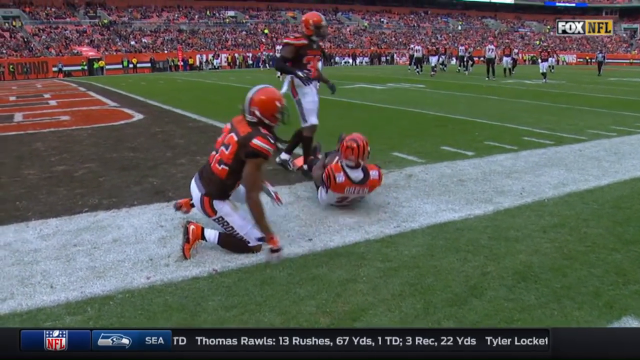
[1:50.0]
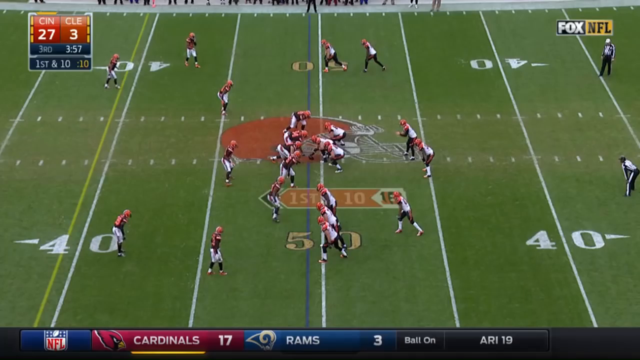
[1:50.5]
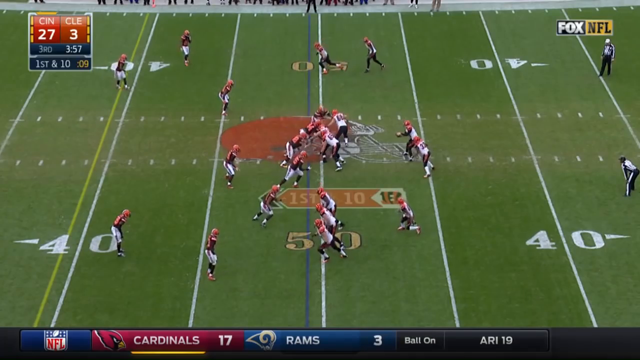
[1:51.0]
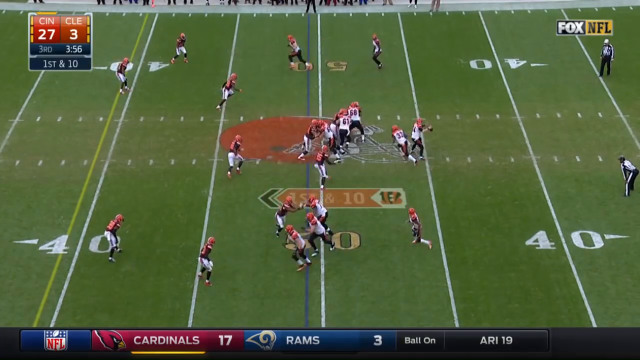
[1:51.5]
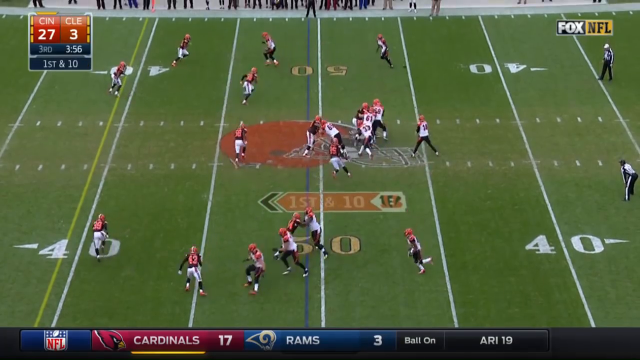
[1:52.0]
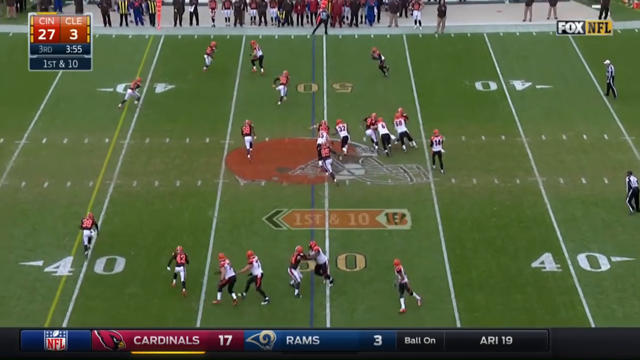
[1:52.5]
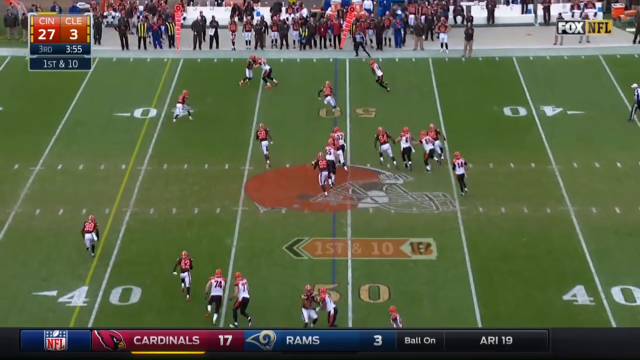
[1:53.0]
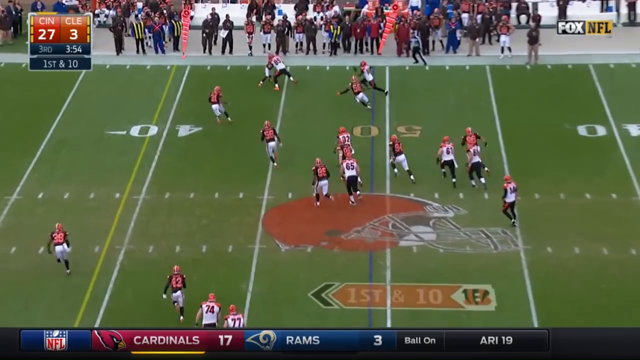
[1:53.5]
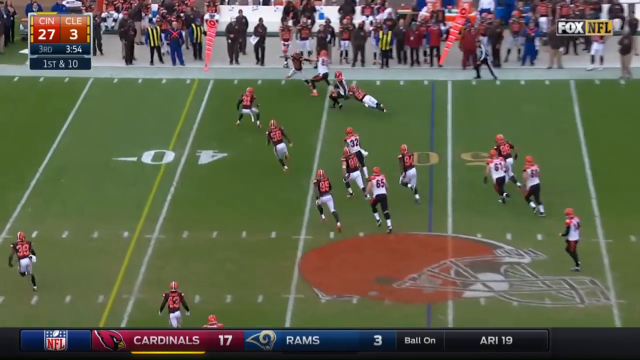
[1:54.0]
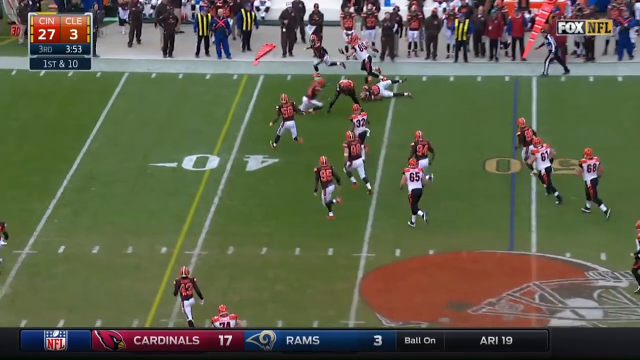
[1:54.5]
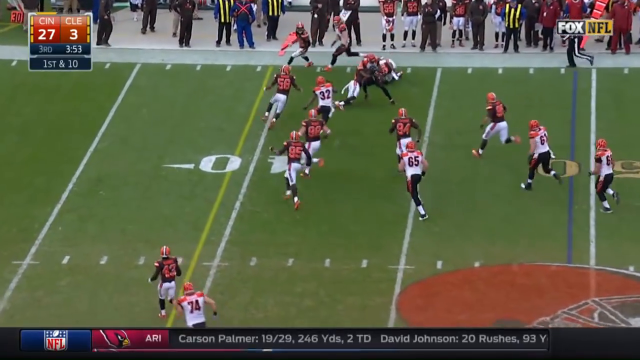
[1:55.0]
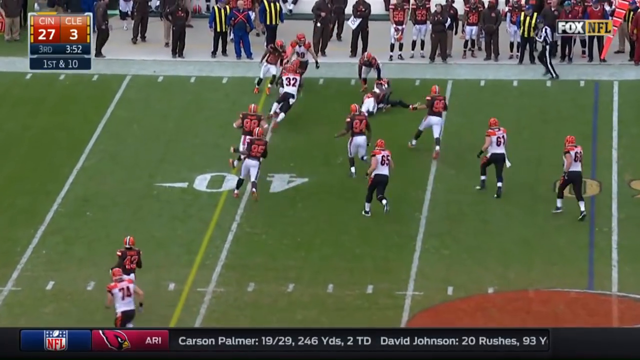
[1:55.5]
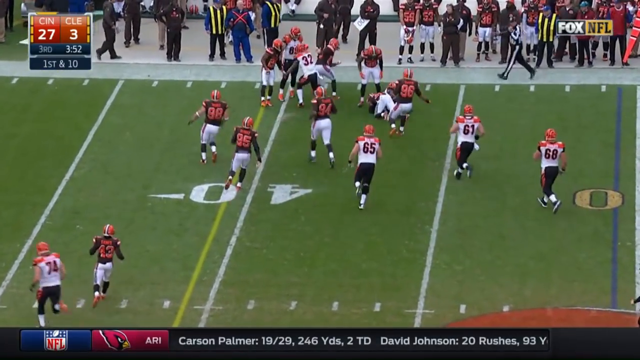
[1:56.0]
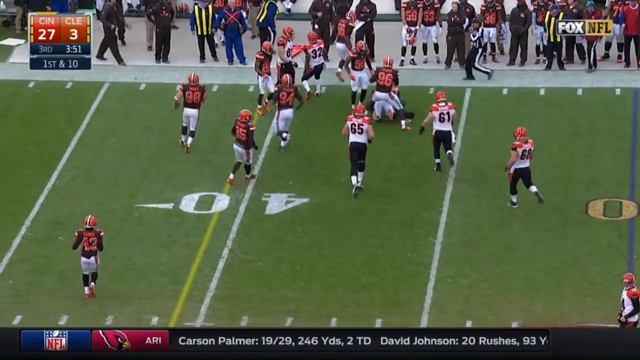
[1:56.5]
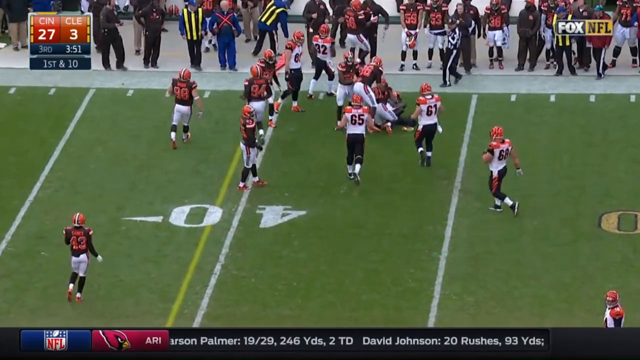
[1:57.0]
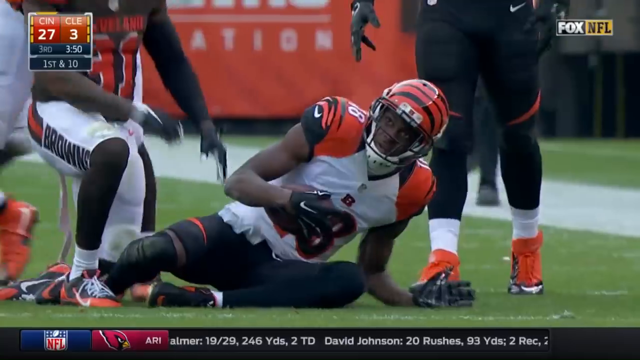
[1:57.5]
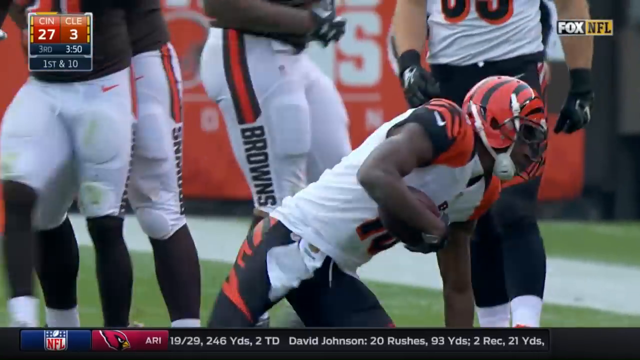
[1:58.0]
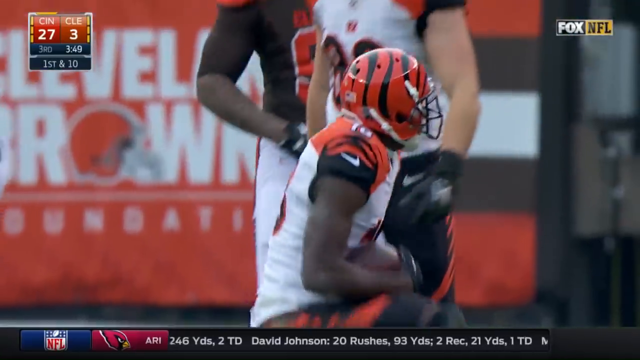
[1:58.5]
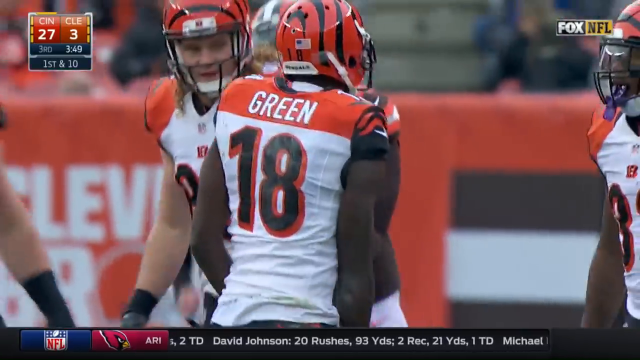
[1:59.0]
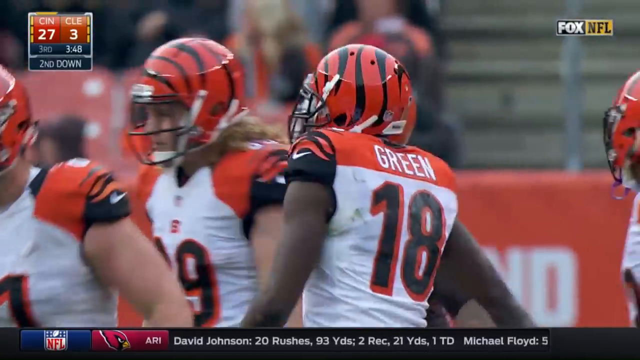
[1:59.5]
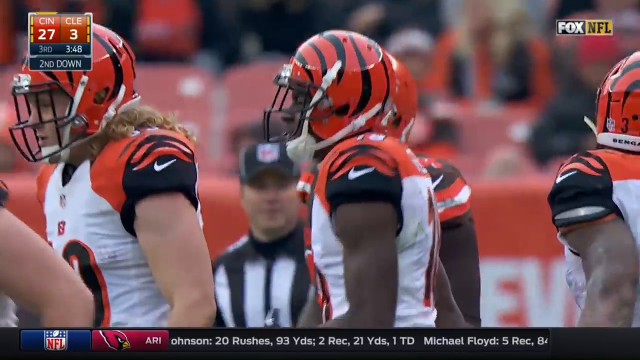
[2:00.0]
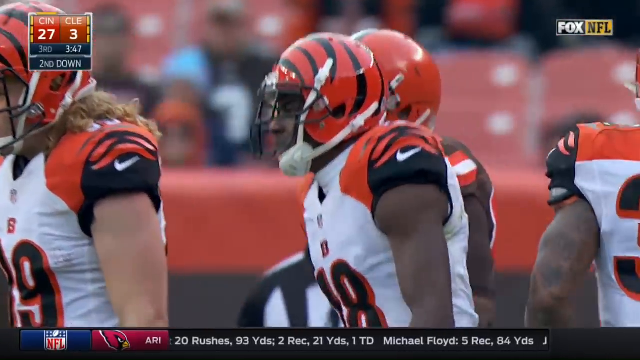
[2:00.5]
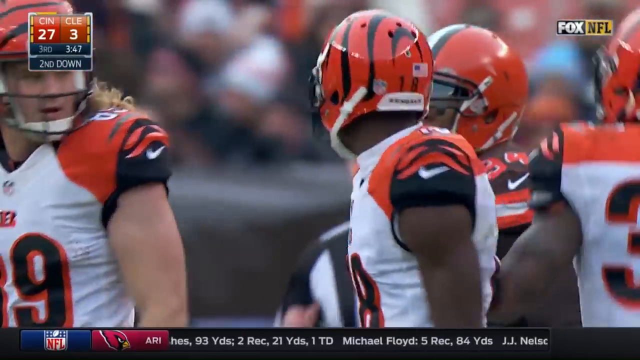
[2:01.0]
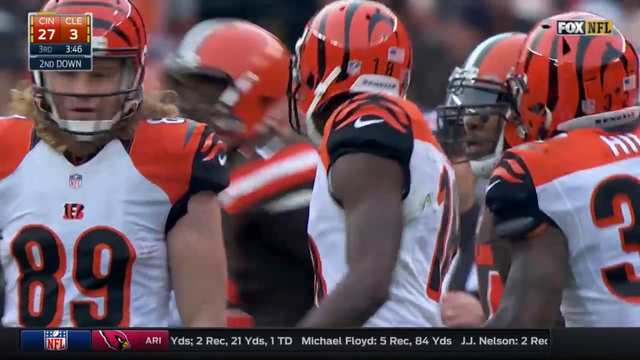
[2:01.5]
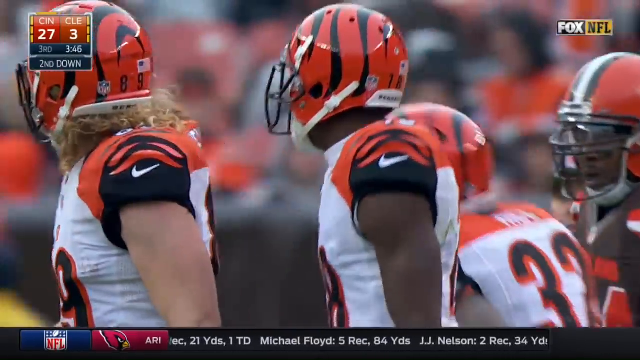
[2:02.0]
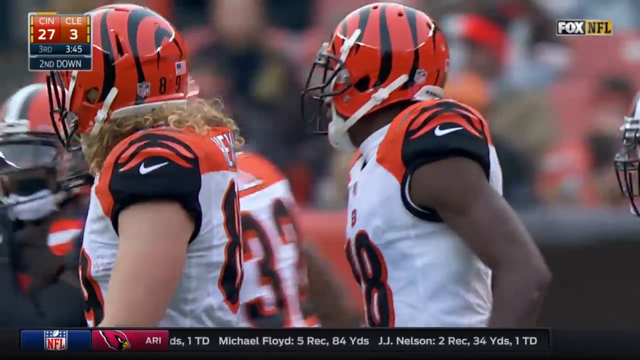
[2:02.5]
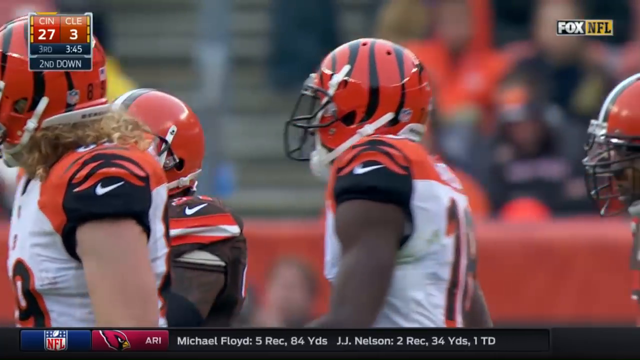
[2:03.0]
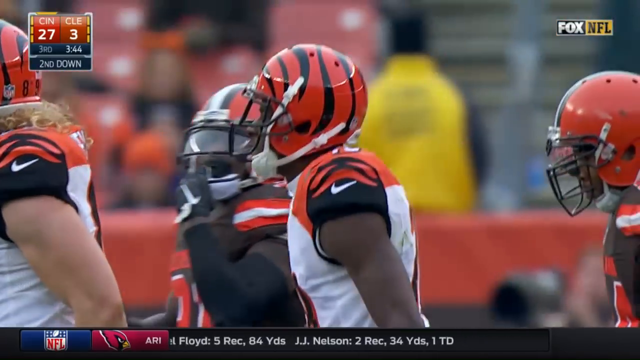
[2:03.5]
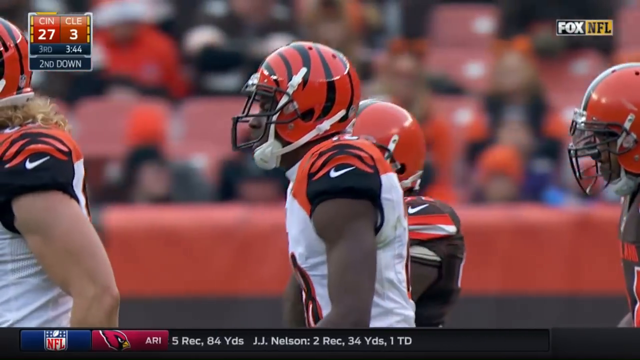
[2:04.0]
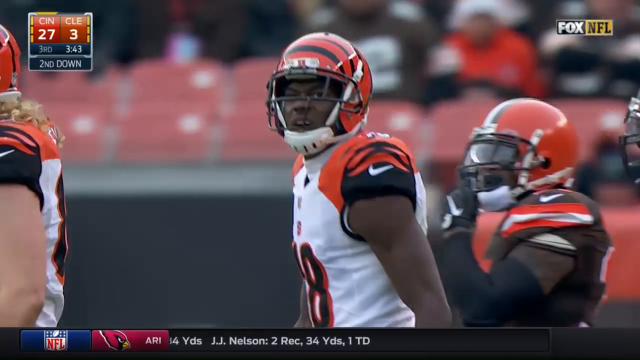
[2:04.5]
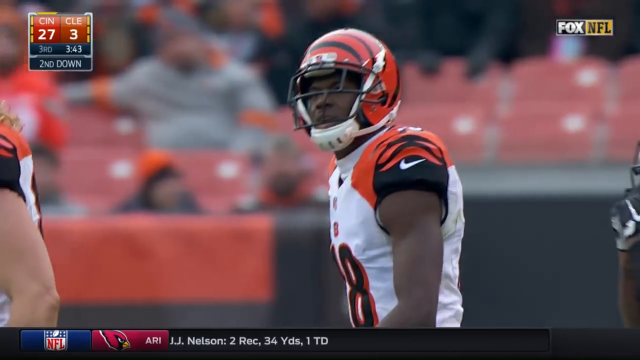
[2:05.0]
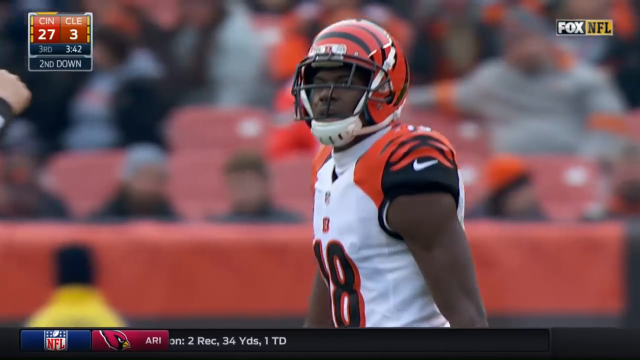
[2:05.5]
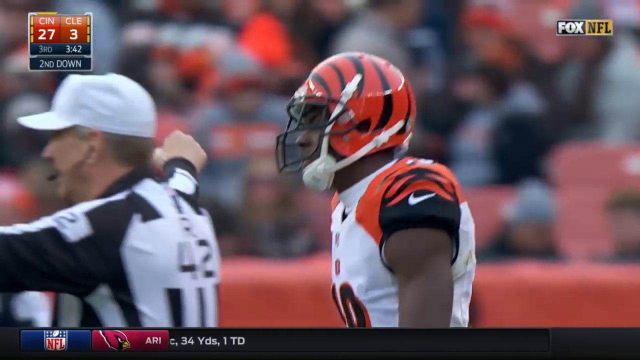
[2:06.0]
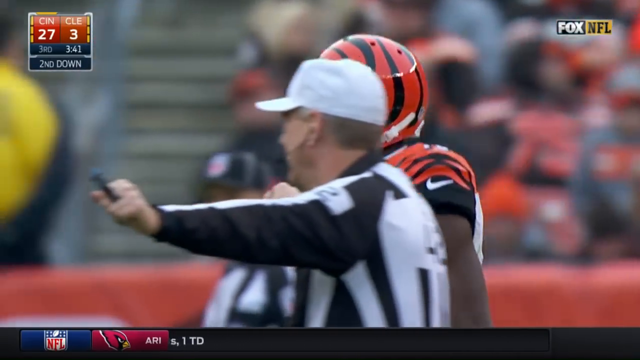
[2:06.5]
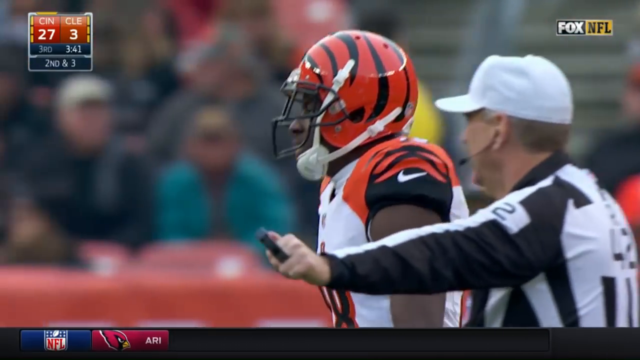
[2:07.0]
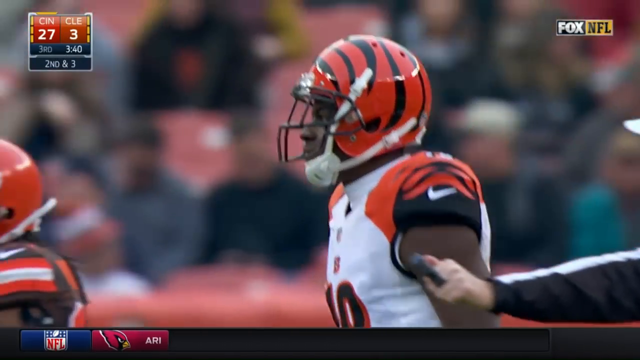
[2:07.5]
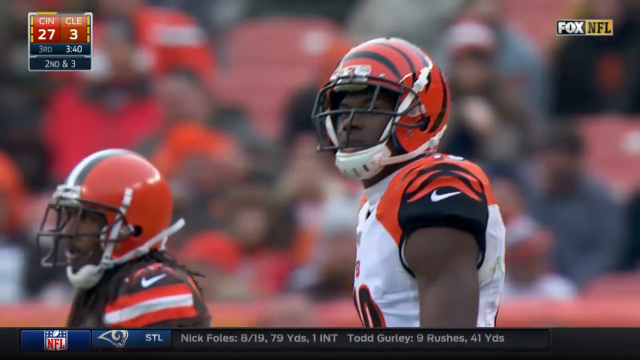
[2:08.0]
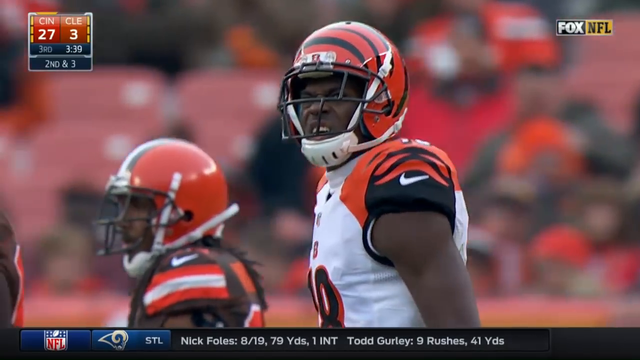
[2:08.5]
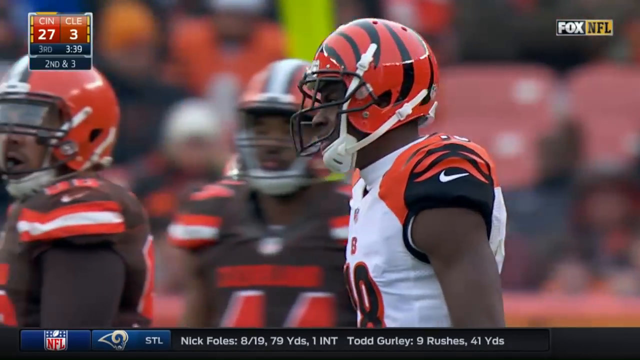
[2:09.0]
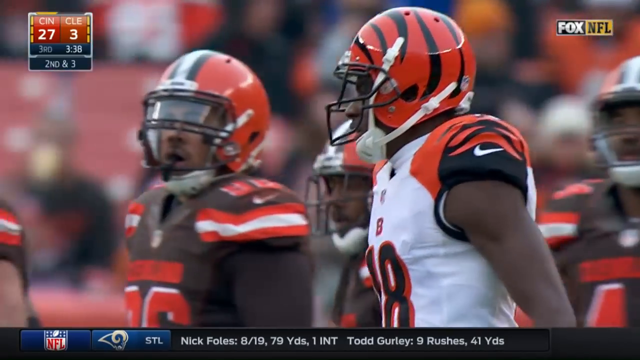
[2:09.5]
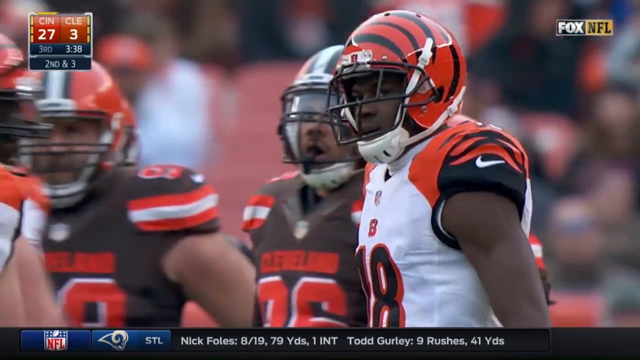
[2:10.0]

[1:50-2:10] Another catch by AJ Green is shown, with Cincinnati now leading 27-3. Dalton takes the snap and throws a very short pass to Green, who gains about 6 or 7 yards from almost a standing start. More stats from another game appear: St Louis Rams quarterback Nick Foles has passed for 79 yards with one interception, completing only 8 of 19 attempts, and Todd Gurley has carried 9 times for 41 yards. Further information states that LA Rams owner Stan Kroenke is prepared to share the stadium with either the Chargers or the Raiders should they relocate to Los Angeles, and that the Browns supposedly think Jonny Manziel could develop into a starter at quarterback.